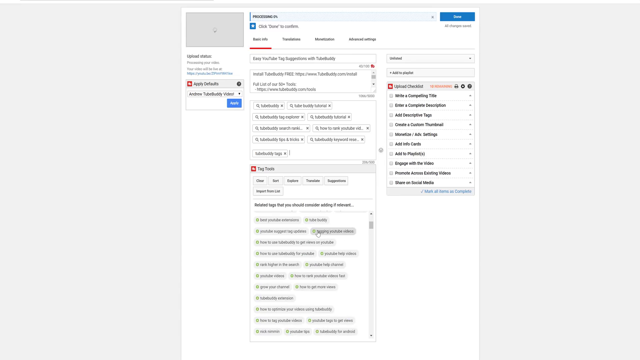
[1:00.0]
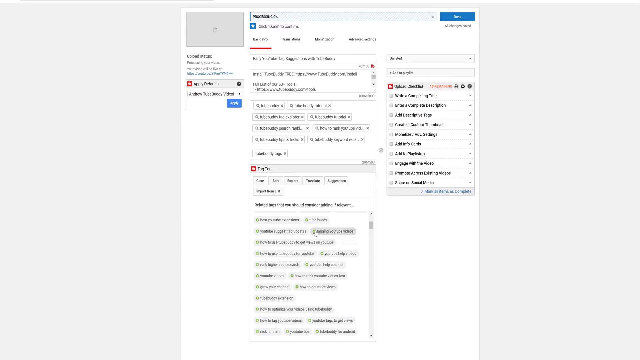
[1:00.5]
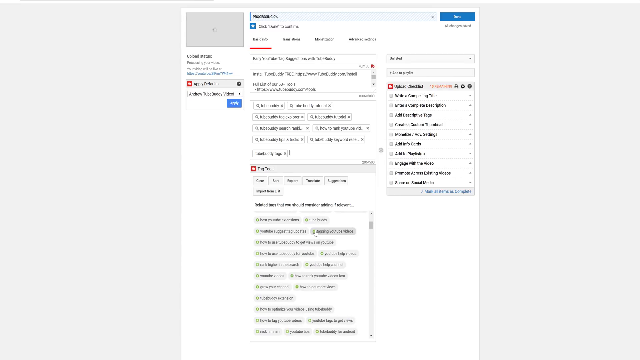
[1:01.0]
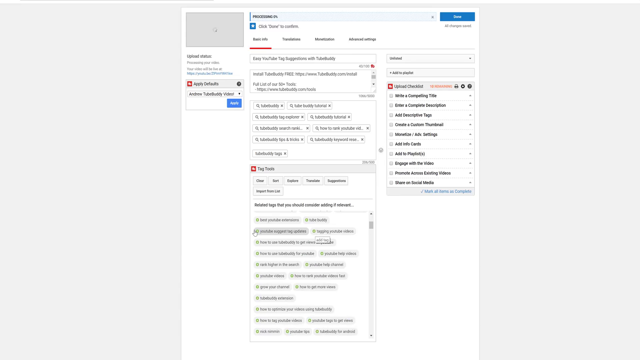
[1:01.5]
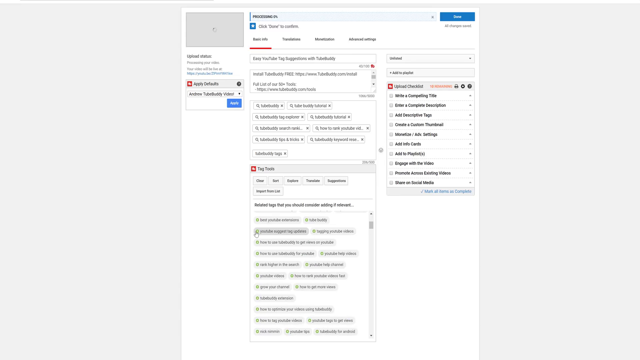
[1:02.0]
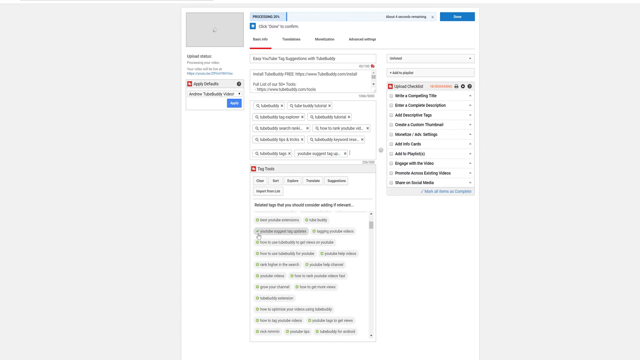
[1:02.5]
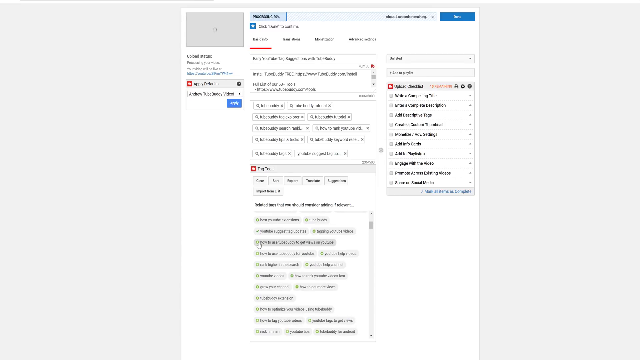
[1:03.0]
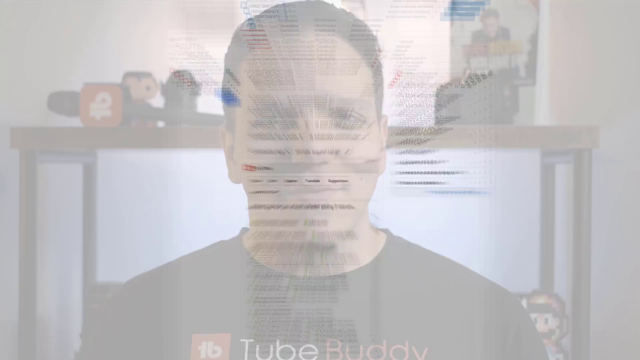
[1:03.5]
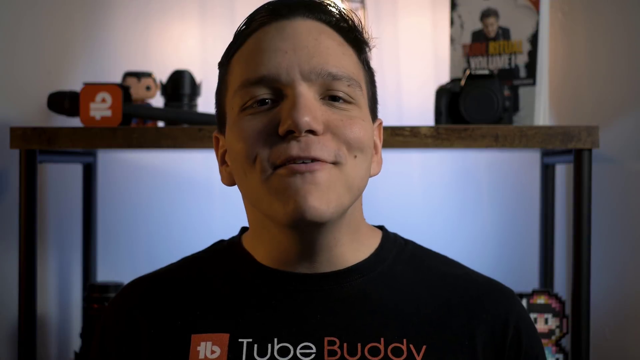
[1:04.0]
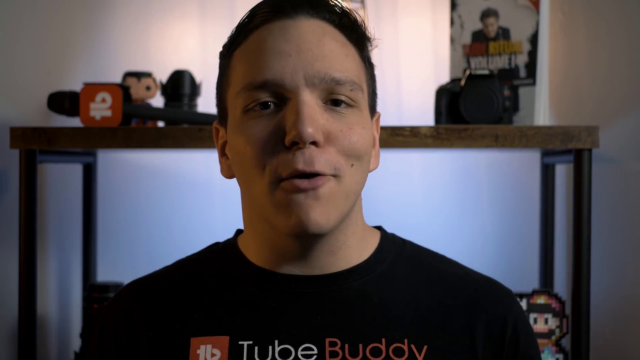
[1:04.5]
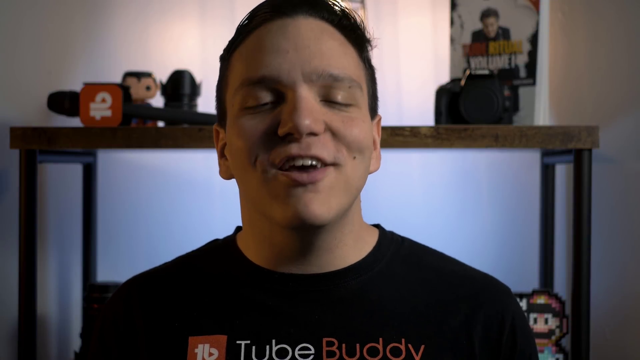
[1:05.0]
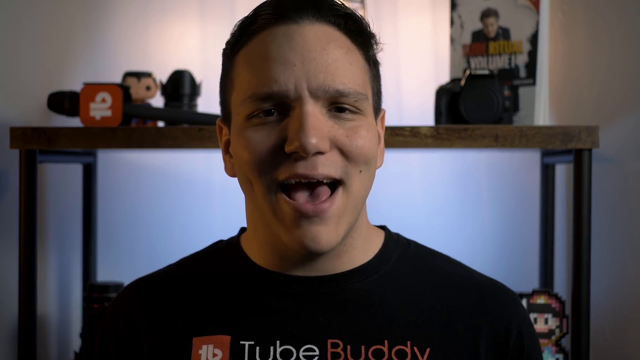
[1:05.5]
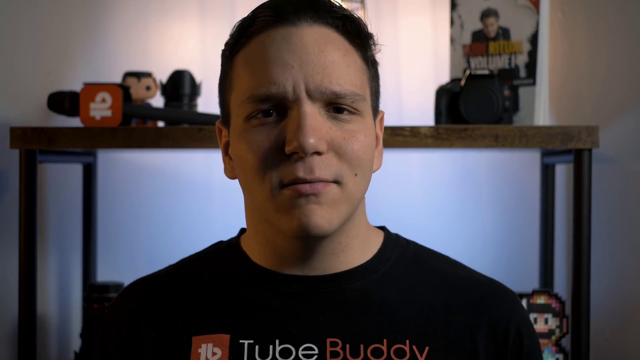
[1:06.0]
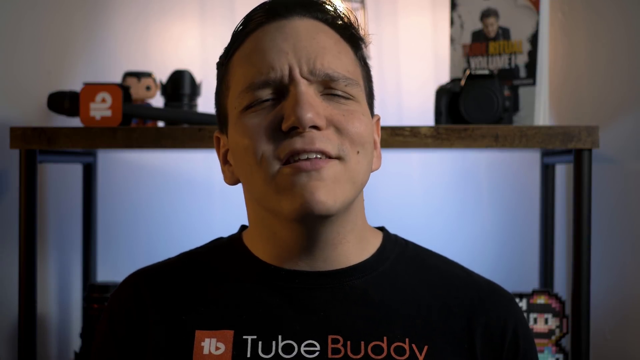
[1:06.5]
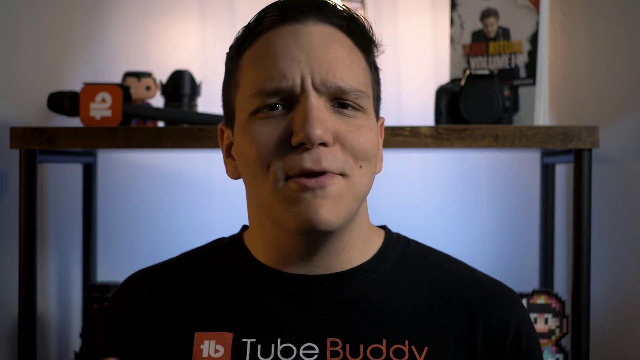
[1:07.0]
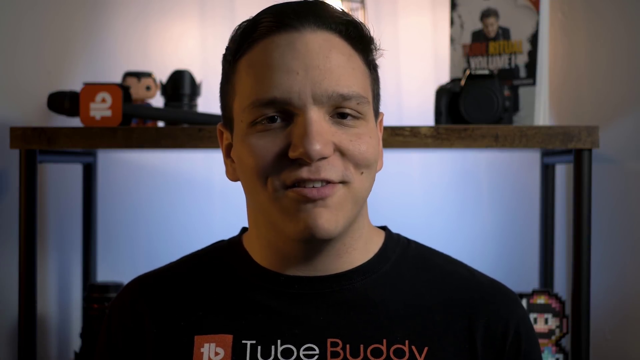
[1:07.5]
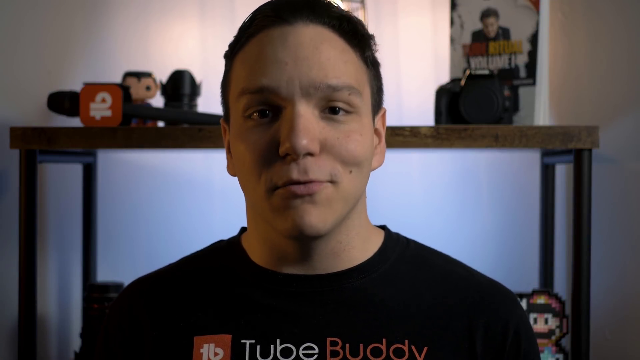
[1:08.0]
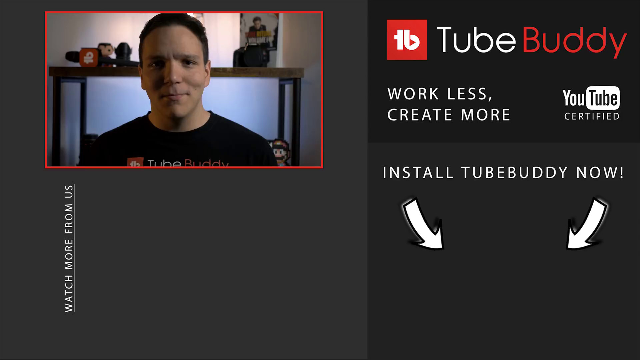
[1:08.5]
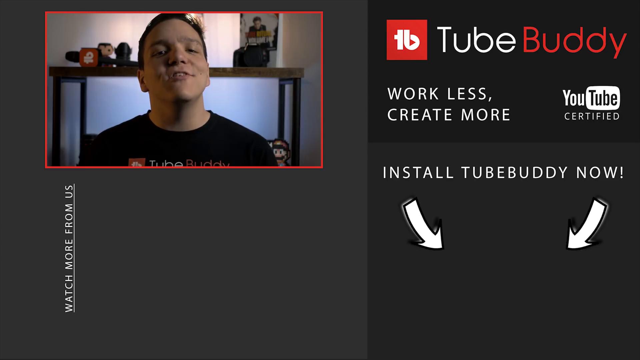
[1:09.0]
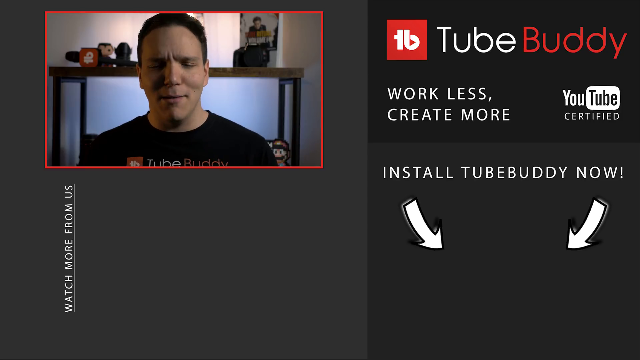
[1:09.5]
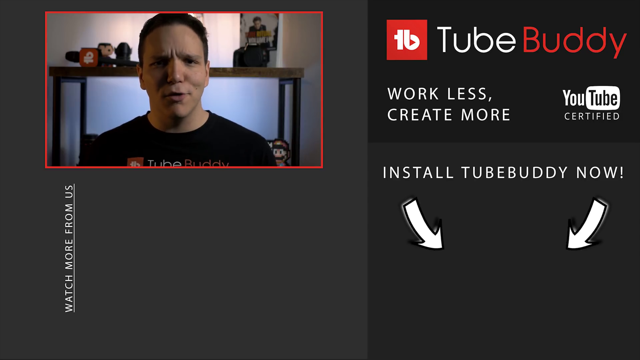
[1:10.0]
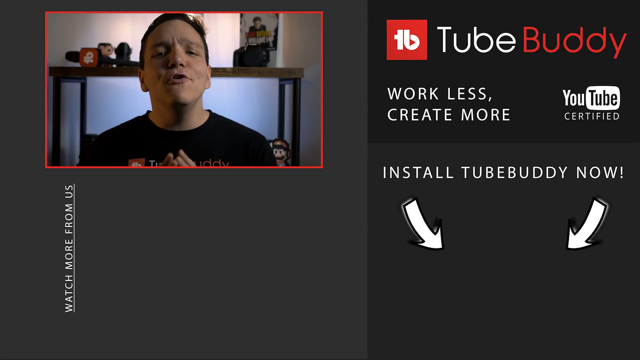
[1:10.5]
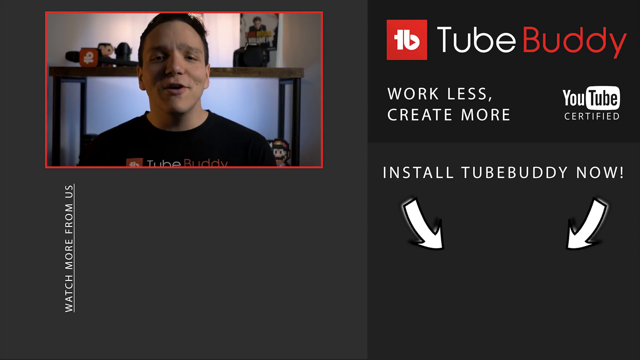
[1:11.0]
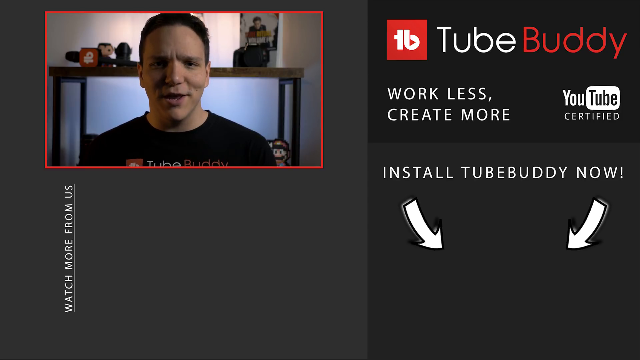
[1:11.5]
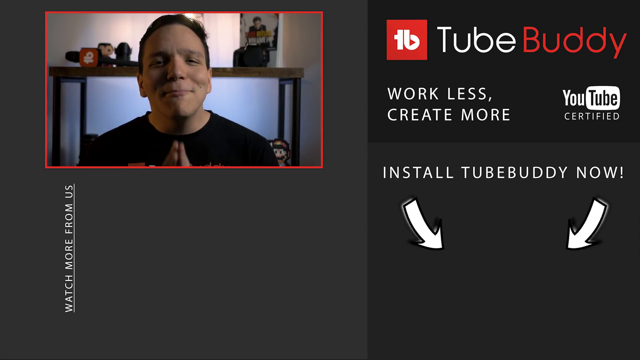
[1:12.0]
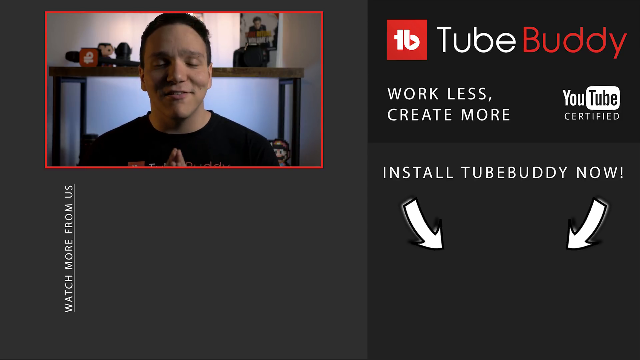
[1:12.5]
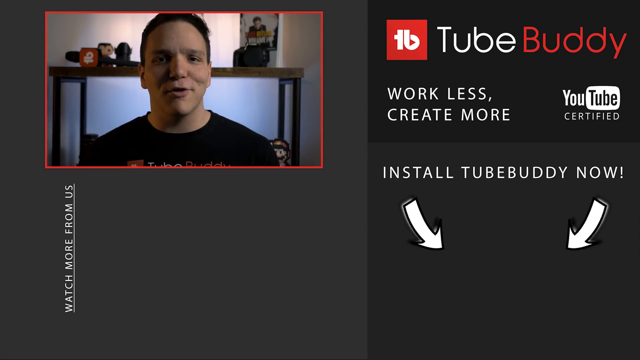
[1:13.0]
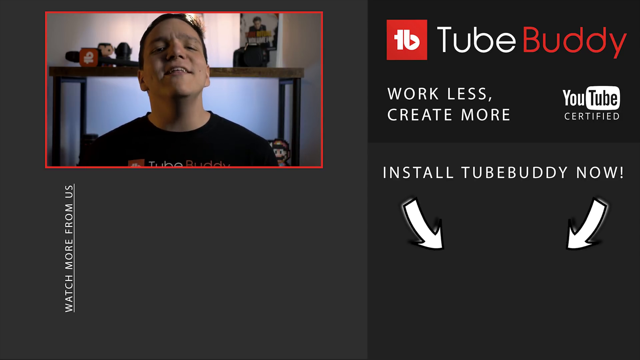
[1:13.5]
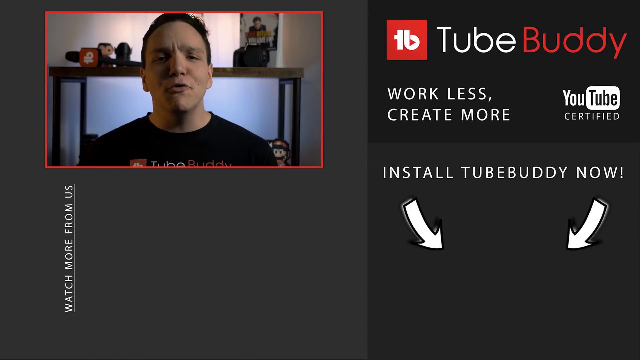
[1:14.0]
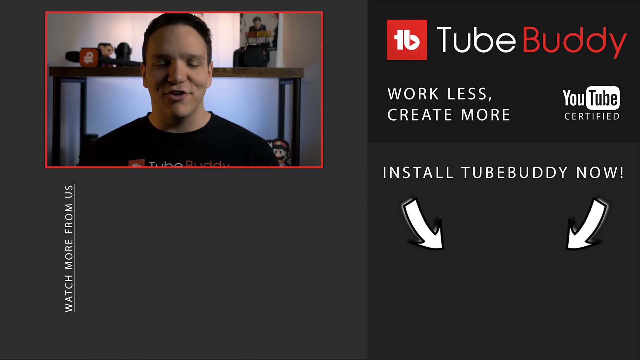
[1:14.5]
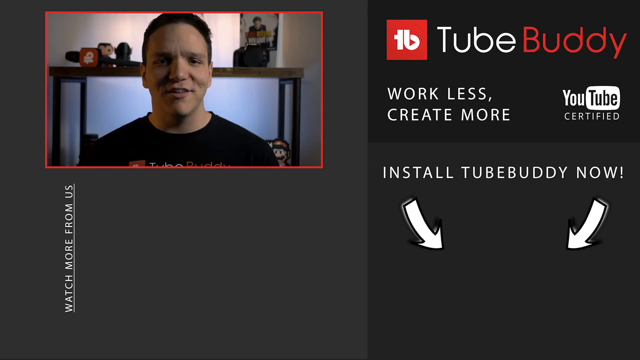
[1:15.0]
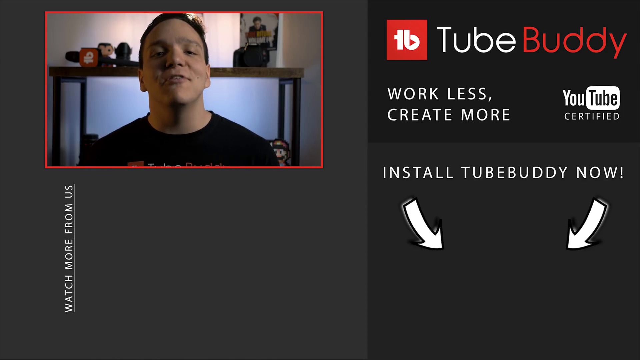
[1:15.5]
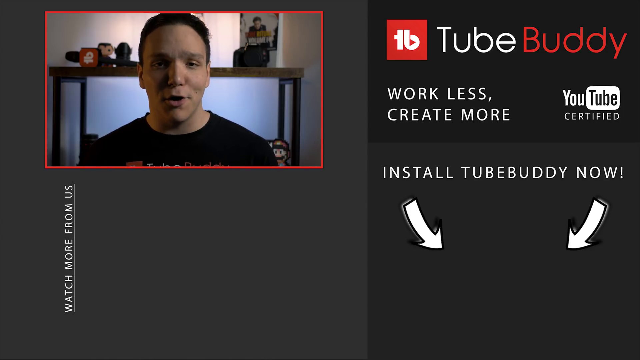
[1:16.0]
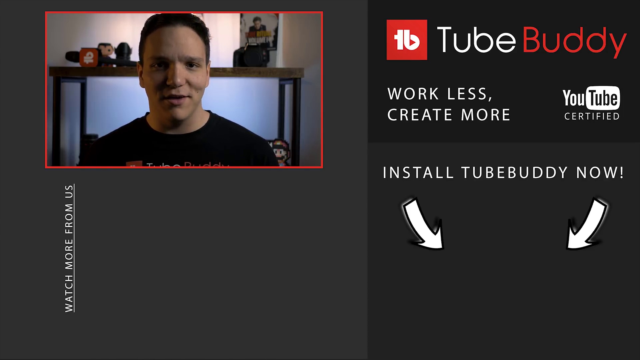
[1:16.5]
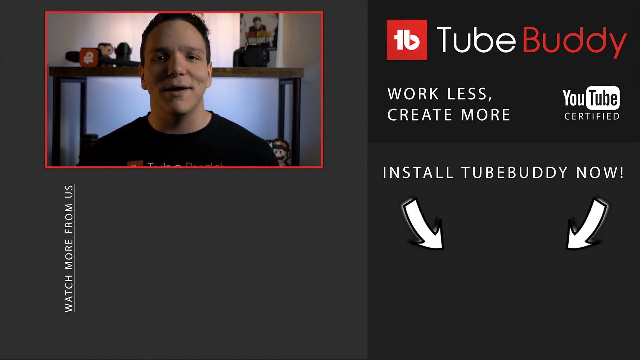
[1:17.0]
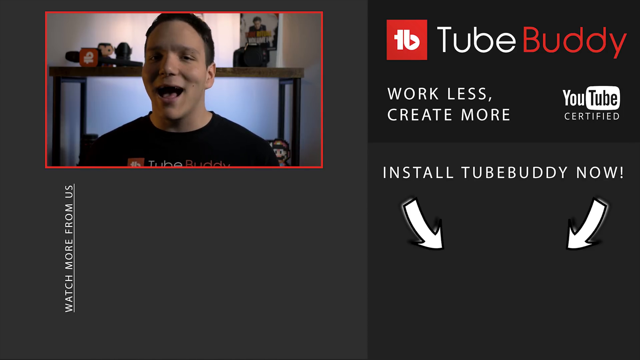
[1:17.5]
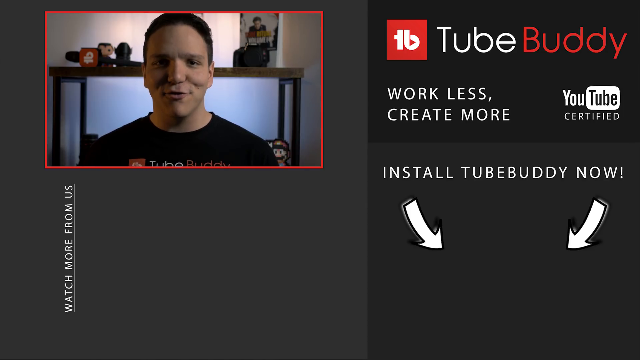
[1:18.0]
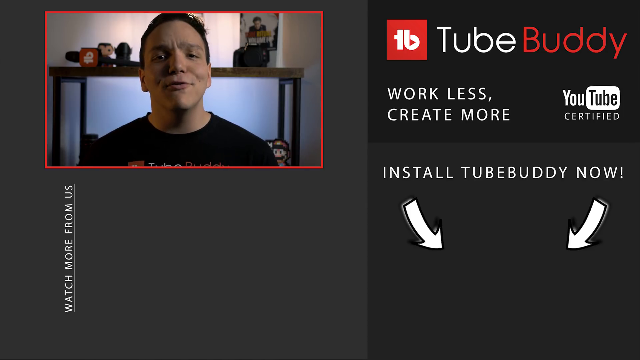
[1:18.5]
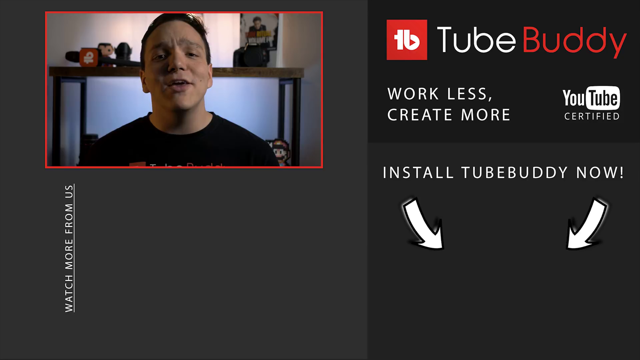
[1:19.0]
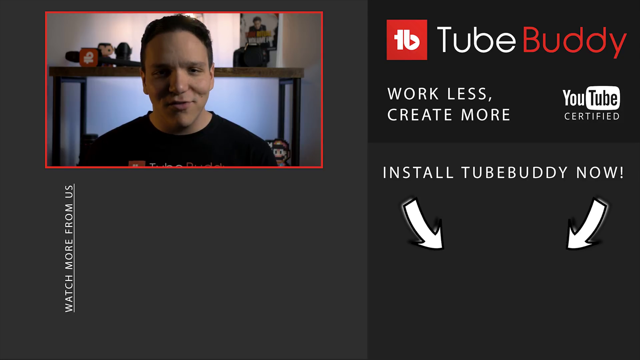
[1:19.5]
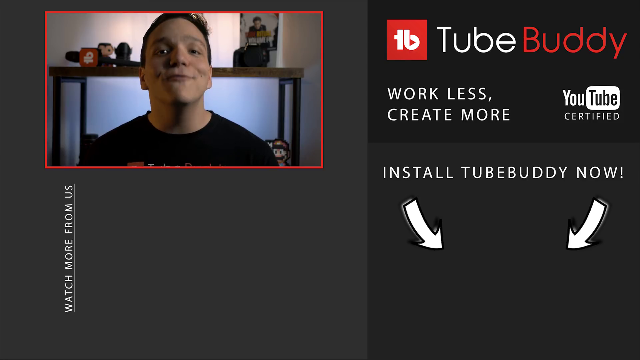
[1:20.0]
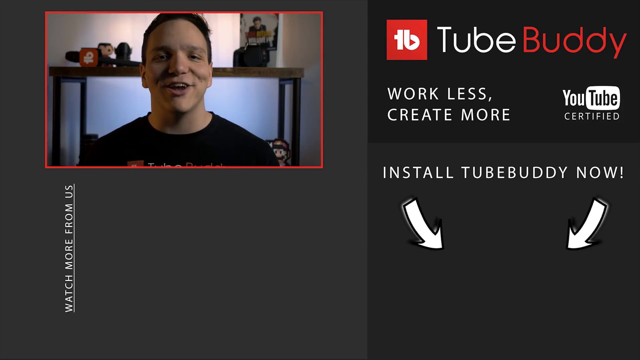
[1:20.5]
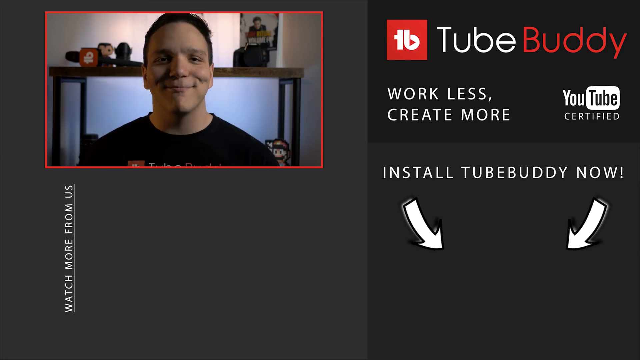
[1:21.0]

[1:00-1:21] A full-screen view of the software the man is using is shown. The video then switches to the man talking; he frowns slightly, not angrily but inquisitively. The video of him then shrinks to a small thumbnail with a red border, and the TB logo appears with the word "TubeBuddy" next to it, the slogan "Work Less, Create More", and a YouTube certified logo next to that. After that comes "Install TubeBuddy Now", apparently the software he was using. Underneath his preview is the text "watch more from us", but there are no previews of other videos next to it, and there is no button under "Install TubeBuddy Now"; instead, two arrows point to nothing.